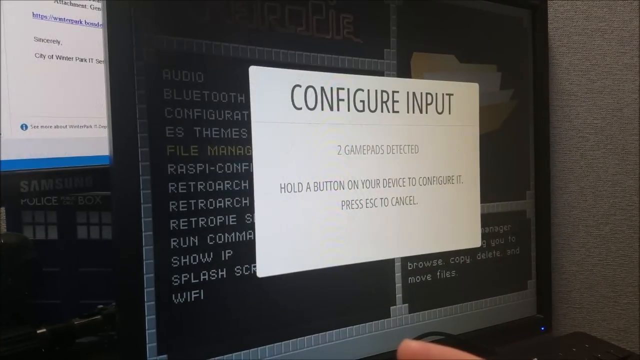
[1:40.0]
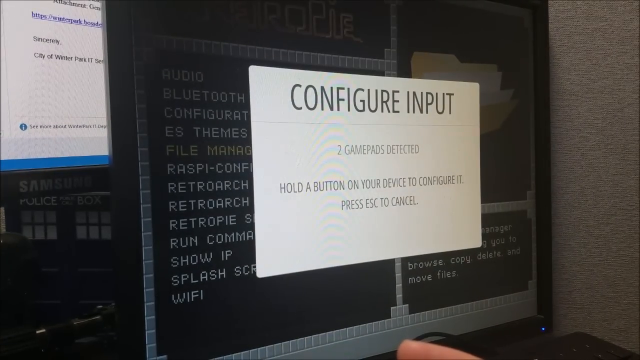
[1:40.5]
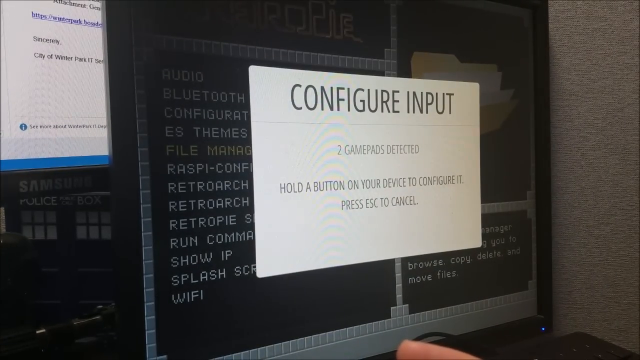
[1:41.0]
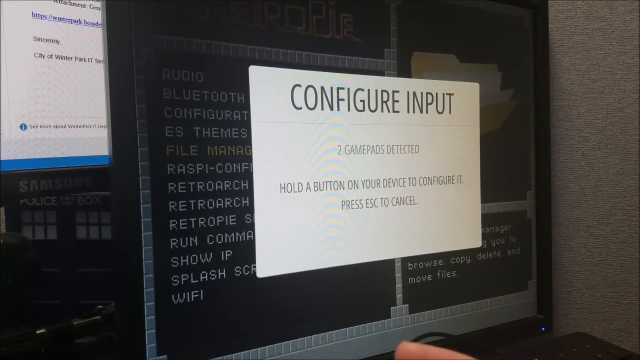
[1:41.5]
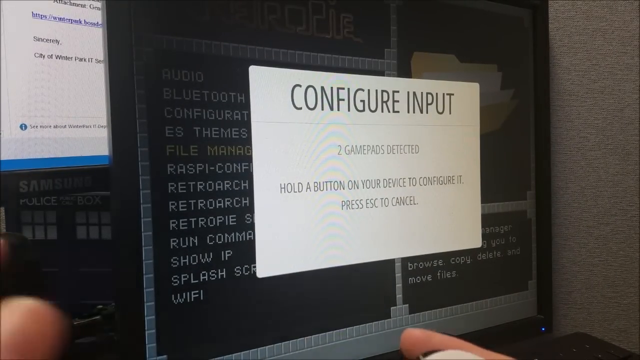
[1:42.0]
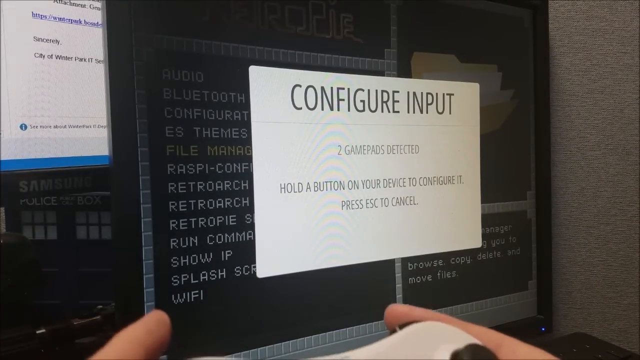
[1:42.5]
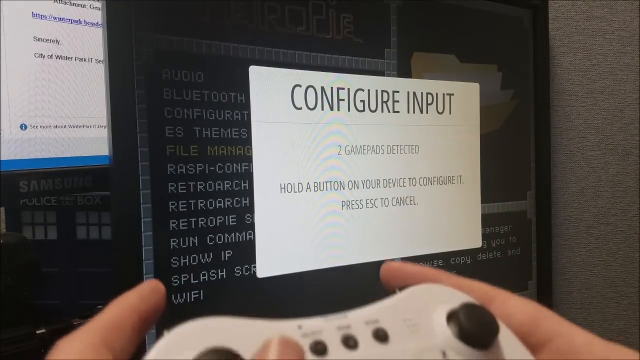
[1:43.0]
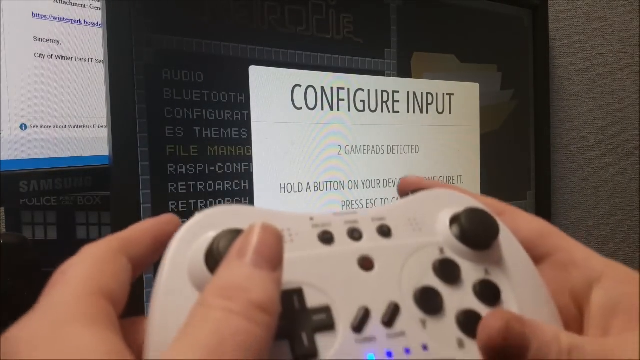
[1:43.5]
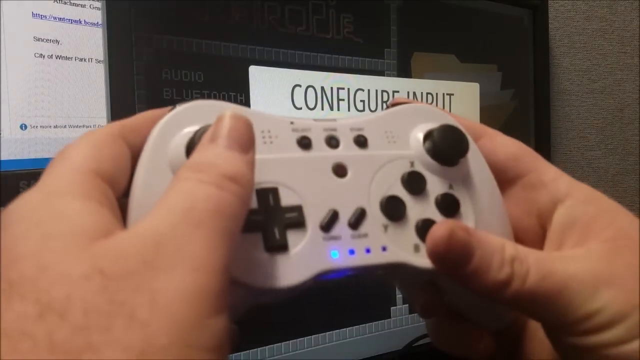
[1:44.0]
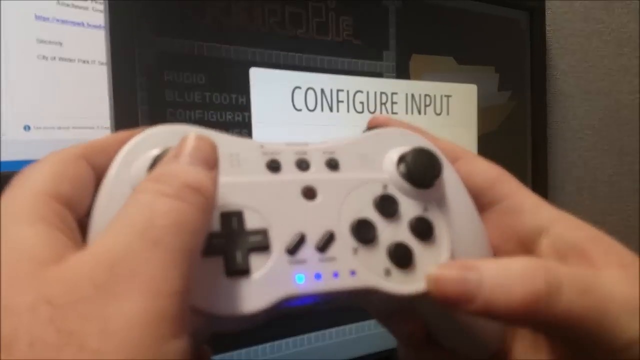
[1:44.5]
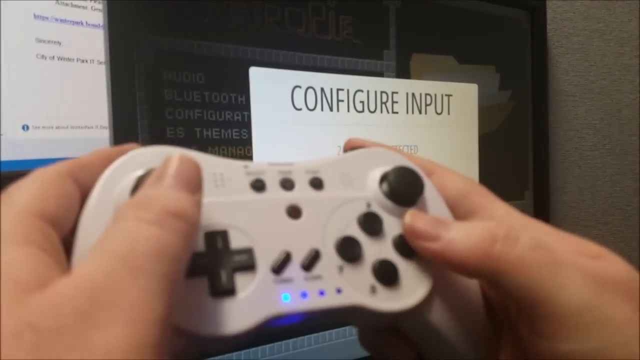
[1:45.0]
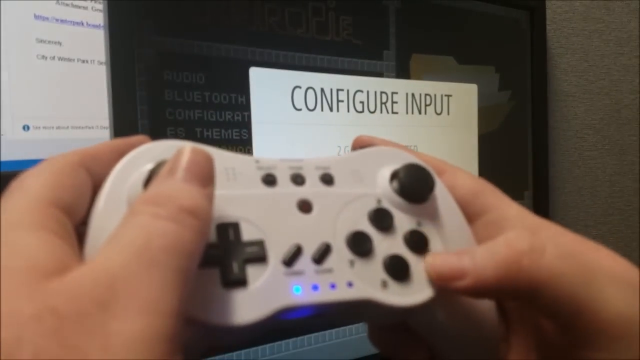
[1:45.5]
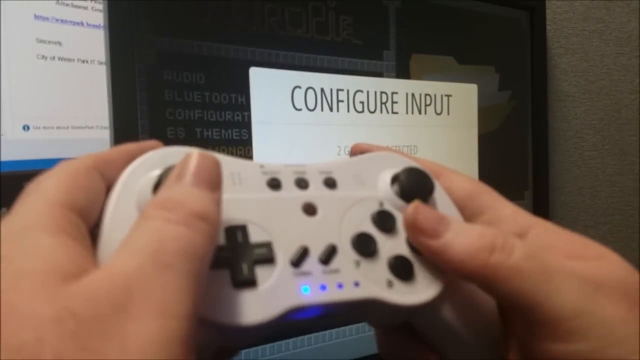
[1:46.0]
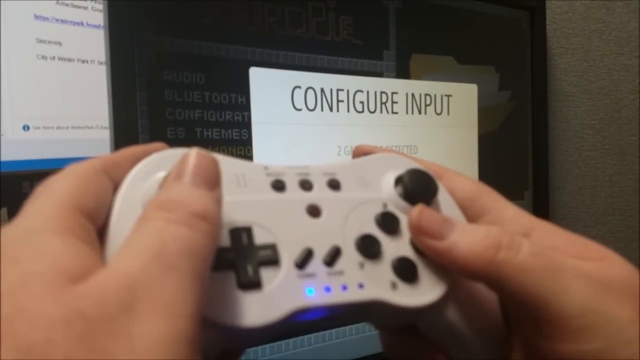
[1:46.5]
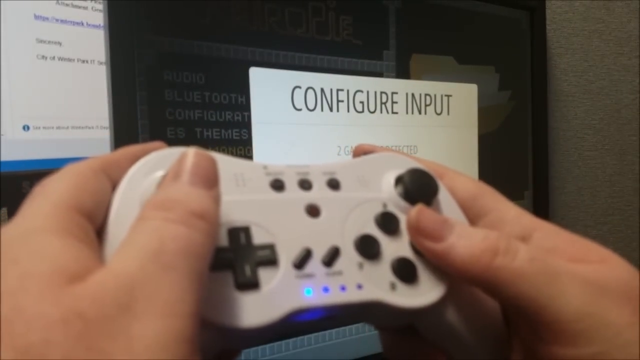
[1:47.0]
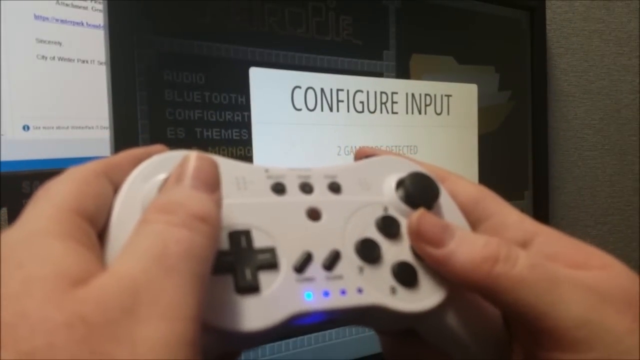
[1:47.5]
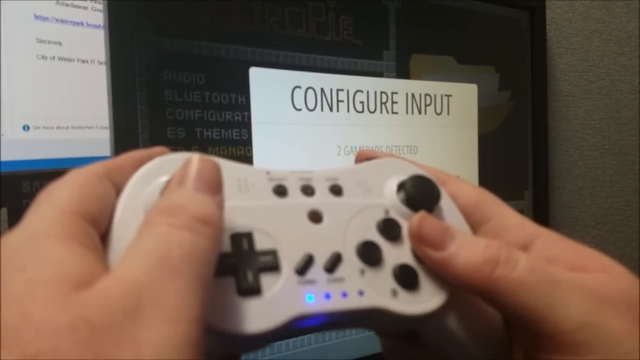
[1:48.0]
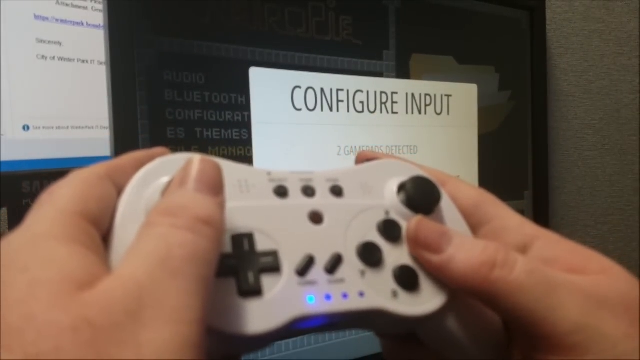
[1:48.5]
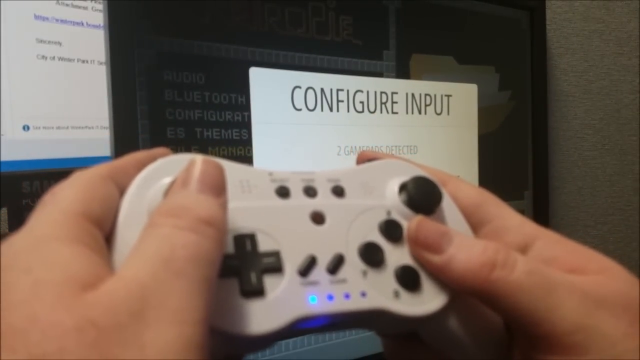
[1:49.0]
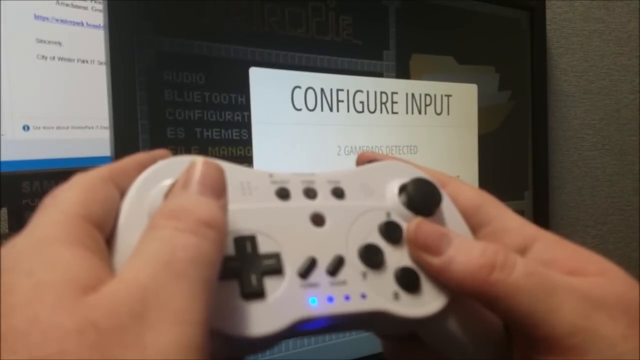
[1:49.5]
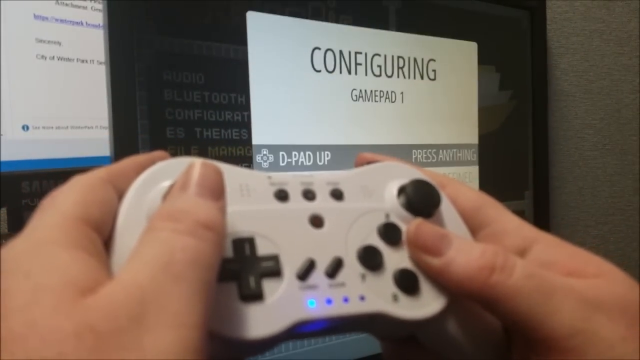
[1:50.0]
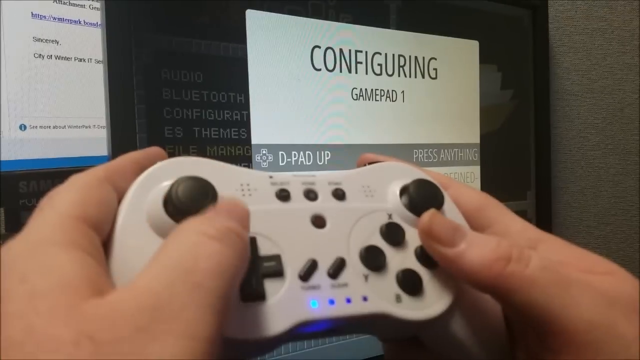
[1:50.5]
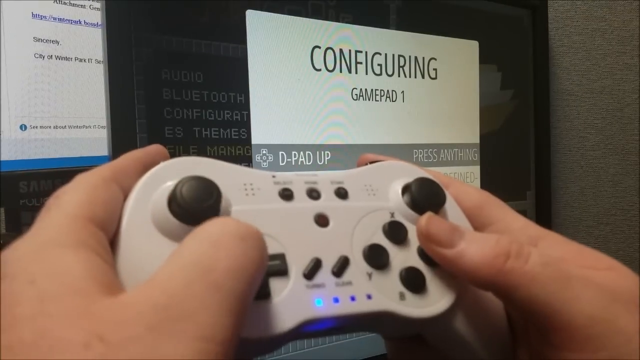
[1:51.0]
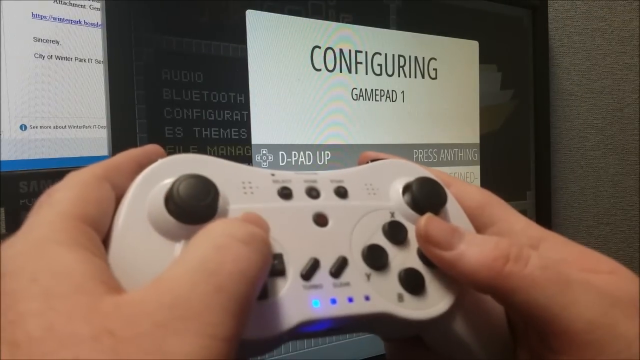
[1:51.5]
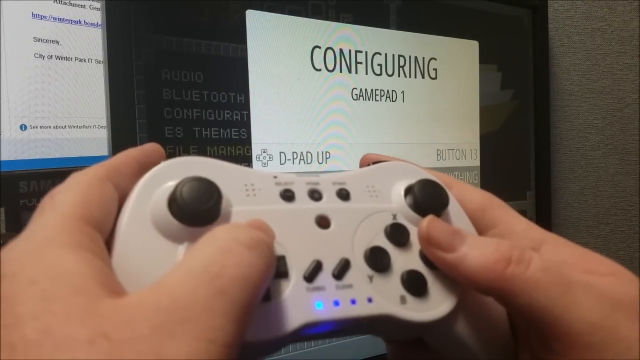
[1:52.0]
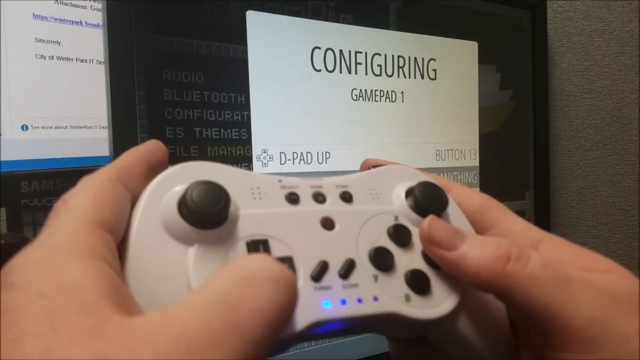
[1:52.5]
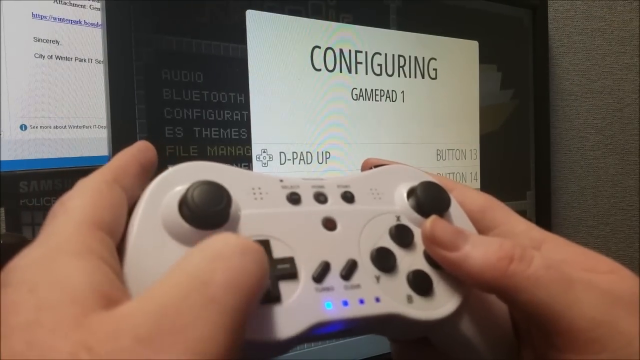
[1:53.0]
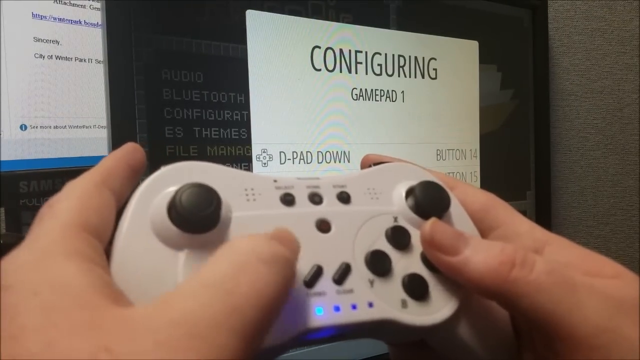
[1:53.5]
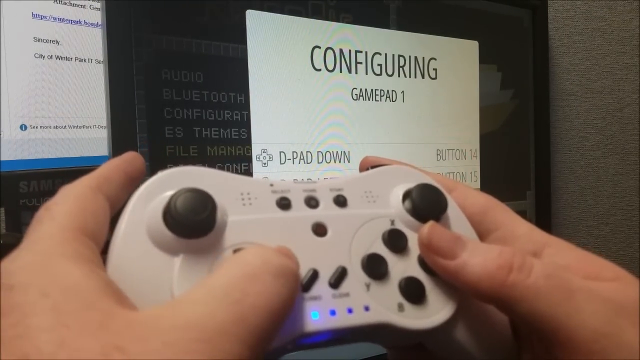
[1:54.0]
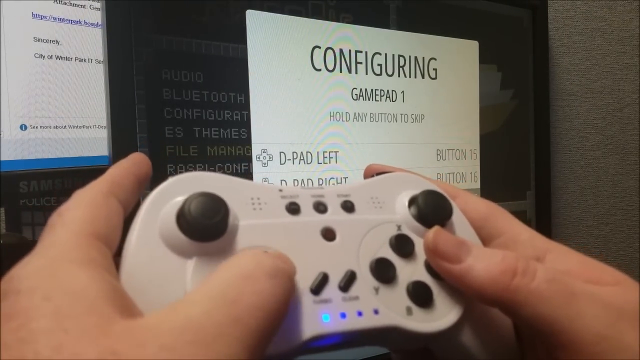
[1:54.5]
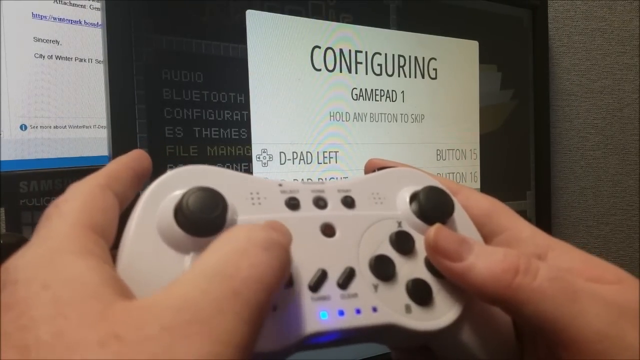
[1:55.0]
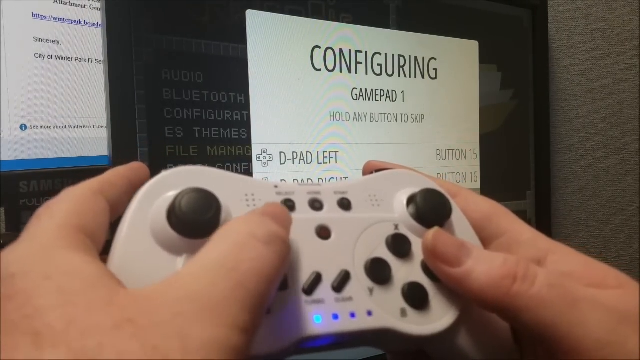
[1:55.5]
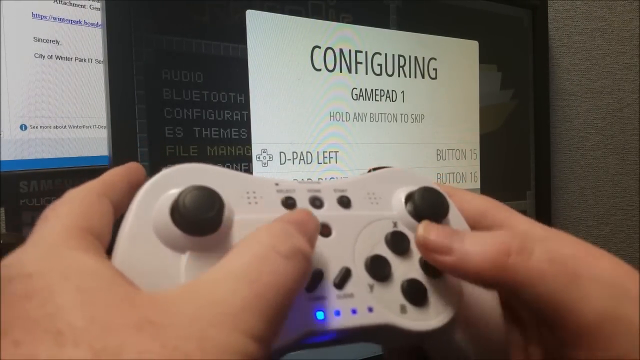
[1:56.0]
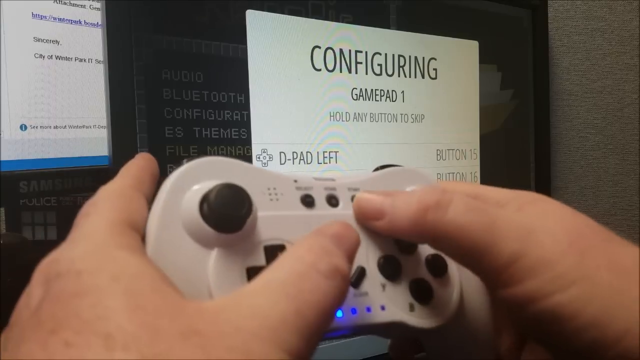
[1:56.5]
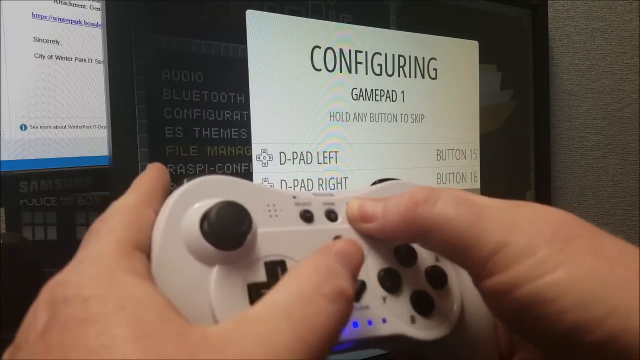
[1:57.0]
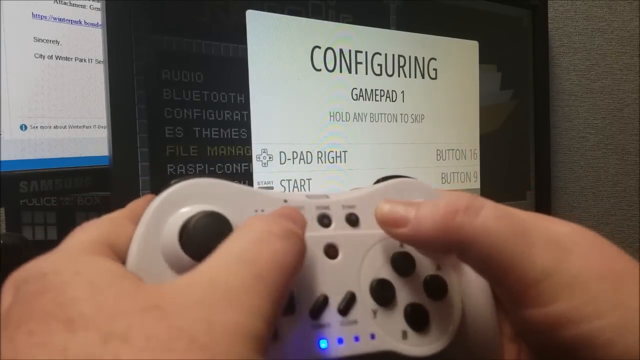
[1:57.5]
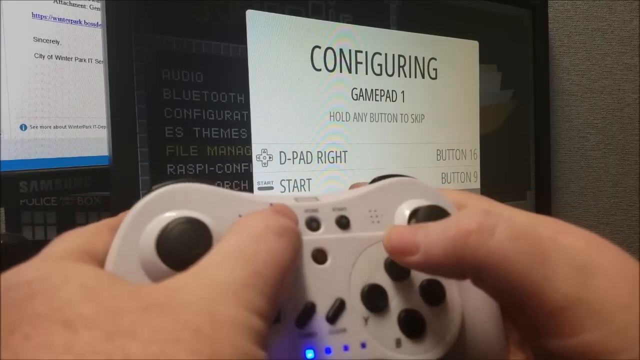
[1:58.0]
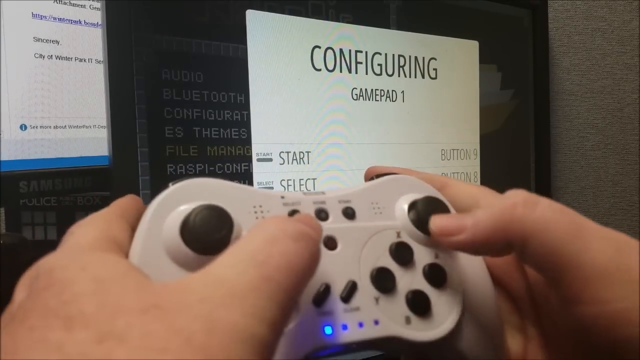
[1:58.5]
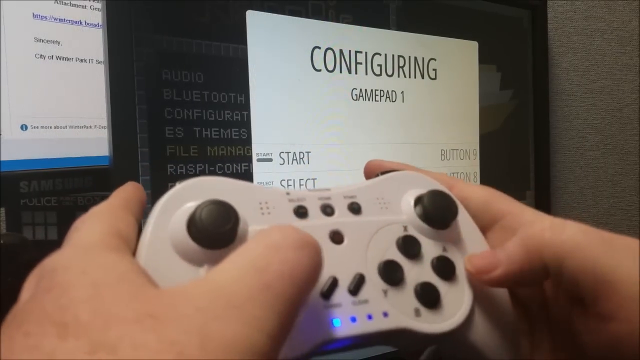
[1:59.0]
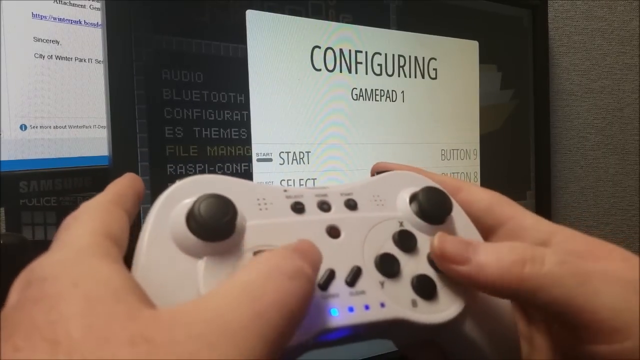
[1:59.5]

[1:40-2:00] Two computer monitors are visible, with a corner of one behind the one in front. The one in the back is a Samsung with a white page of black text open on its screen, and below it on the desk are a Darth Vader head and a tripod, both black. The front monitor shows "RetroPie" at the top and multiple listings, with "File Manager" highlighted. To the left on the screen is a file folder. Over it is a white pop-up with black text reading "Configure Input. Two gamepads detected. Hold a button on your device to configure it. Press Escape to cancel." A person's hands appear in the frame holding a game controller with black buttons and four blue lights at the bottom. They press one button, "configuring" pops up on the screen, and they begin to press the arrow buttons with their left thumb.